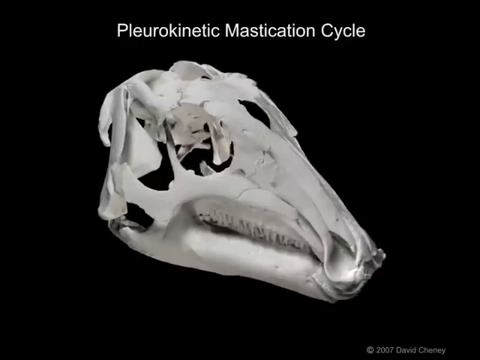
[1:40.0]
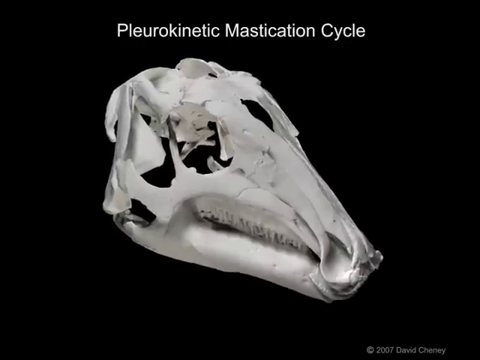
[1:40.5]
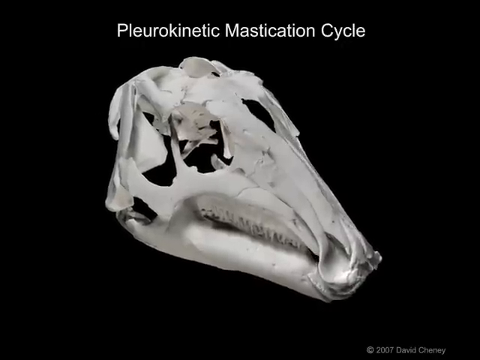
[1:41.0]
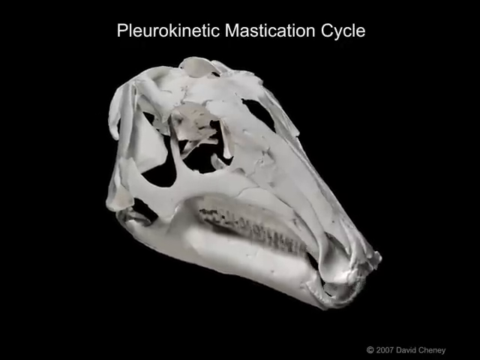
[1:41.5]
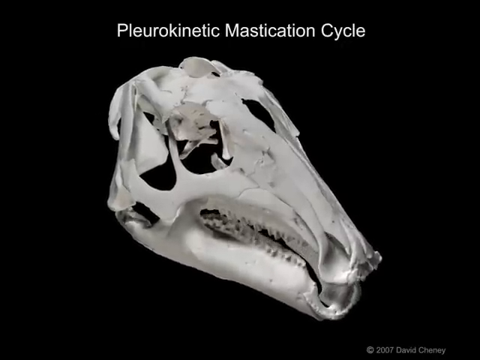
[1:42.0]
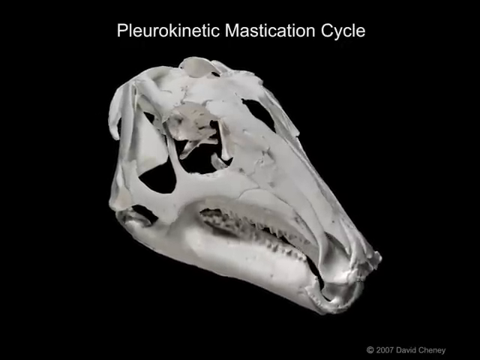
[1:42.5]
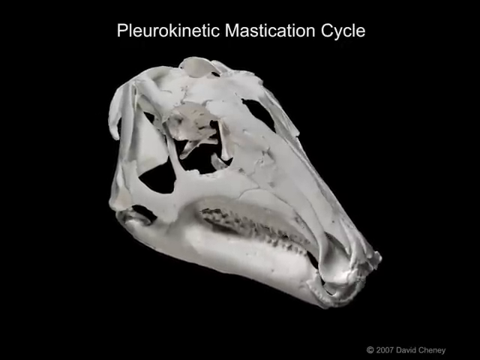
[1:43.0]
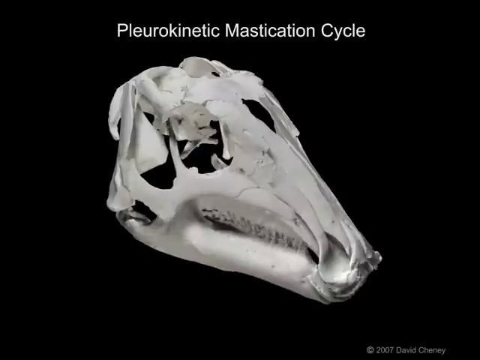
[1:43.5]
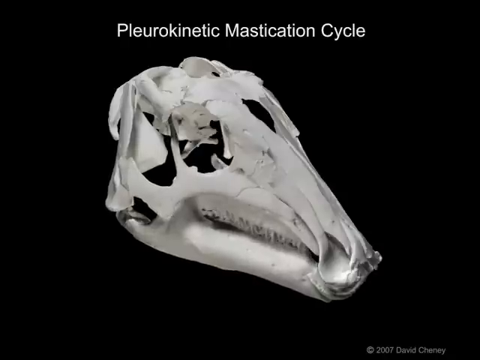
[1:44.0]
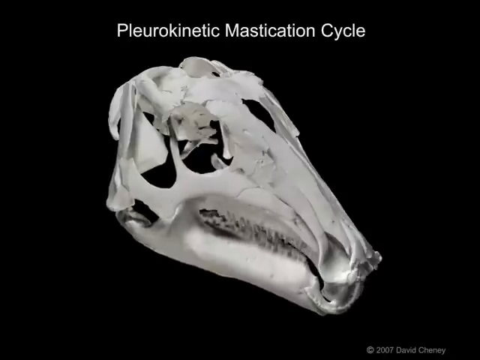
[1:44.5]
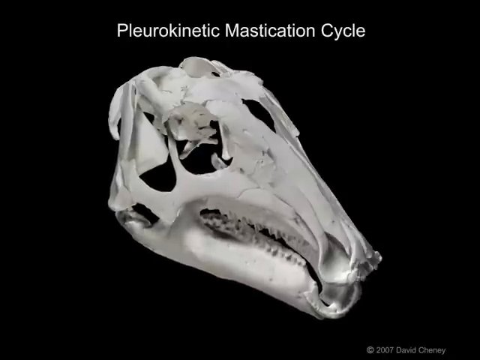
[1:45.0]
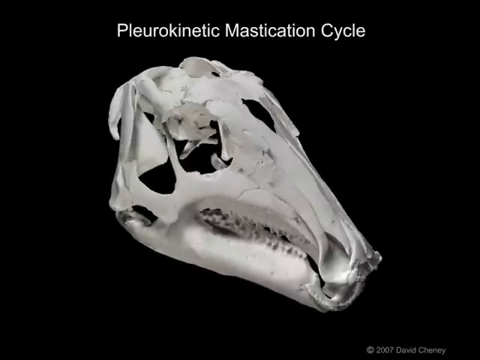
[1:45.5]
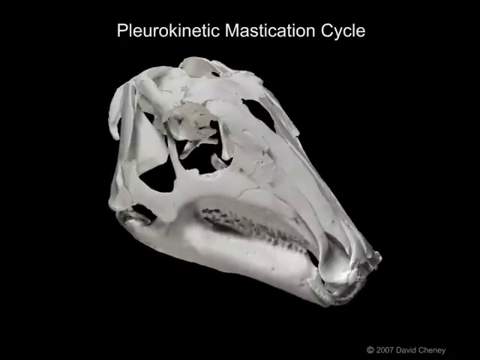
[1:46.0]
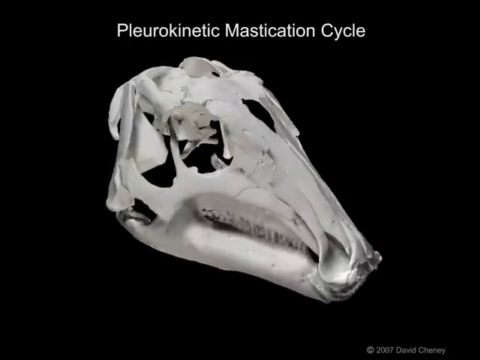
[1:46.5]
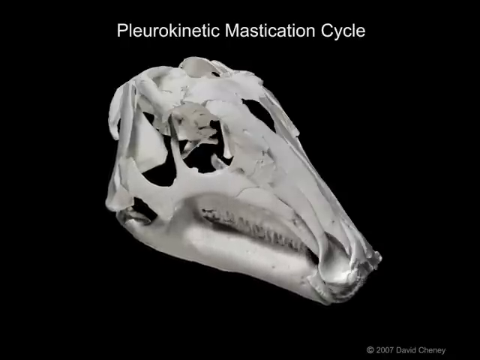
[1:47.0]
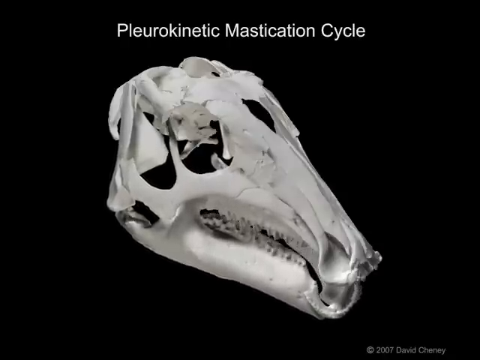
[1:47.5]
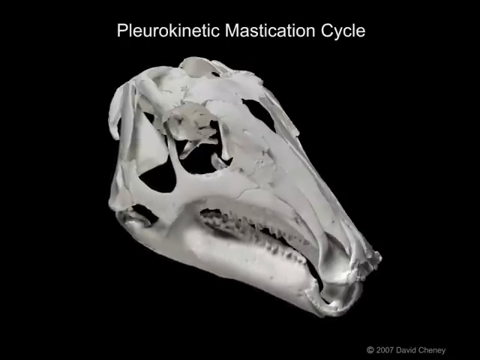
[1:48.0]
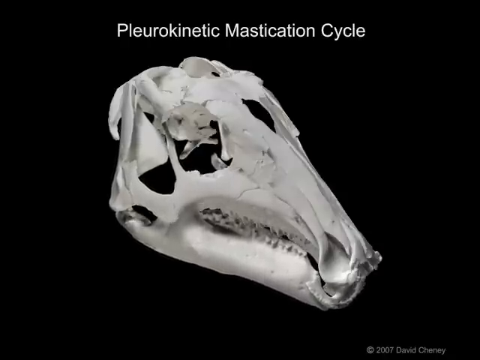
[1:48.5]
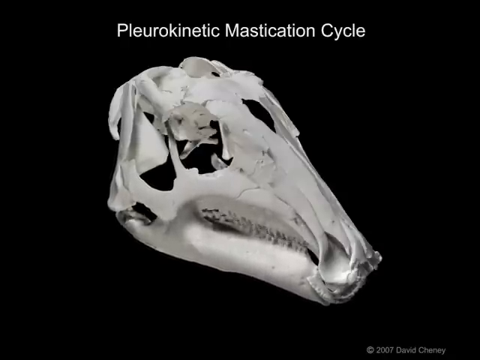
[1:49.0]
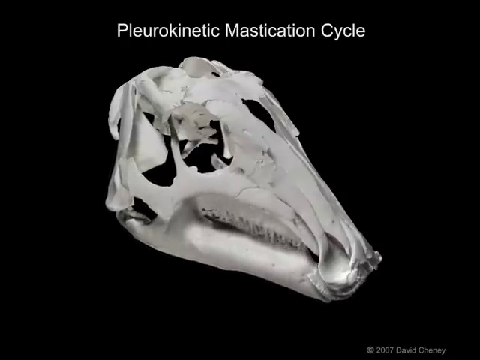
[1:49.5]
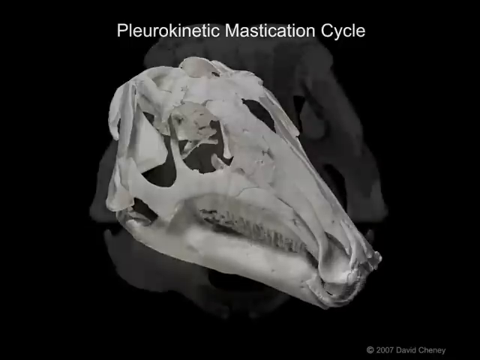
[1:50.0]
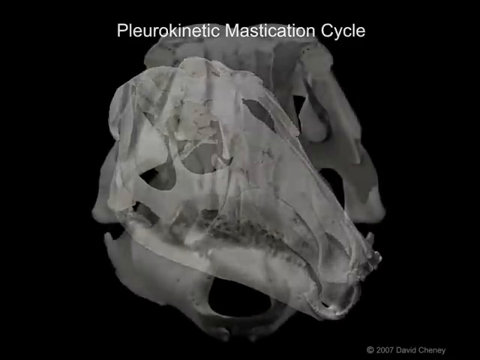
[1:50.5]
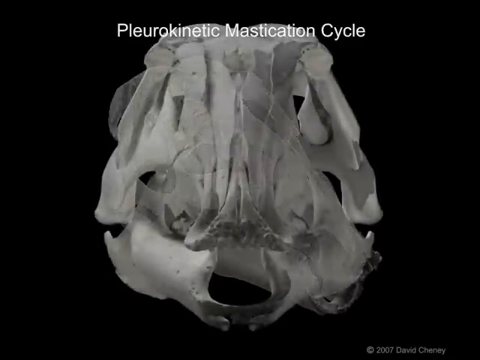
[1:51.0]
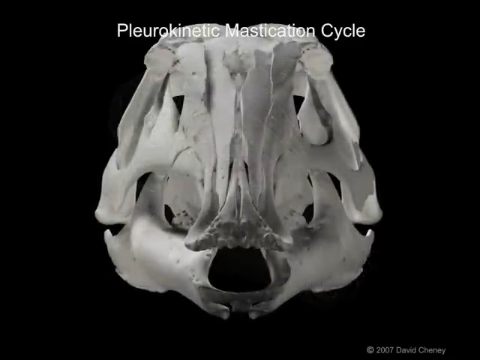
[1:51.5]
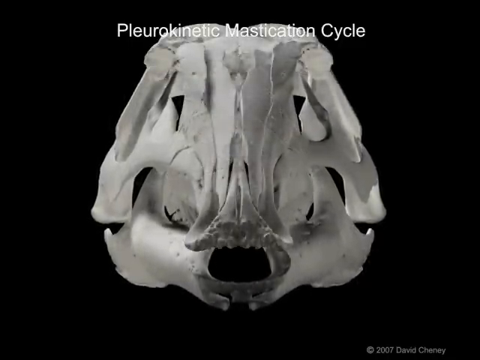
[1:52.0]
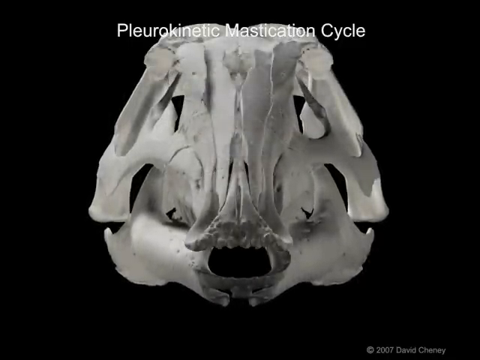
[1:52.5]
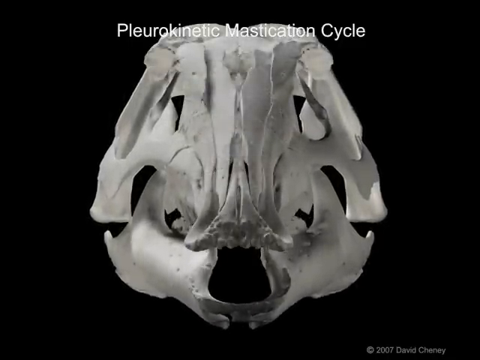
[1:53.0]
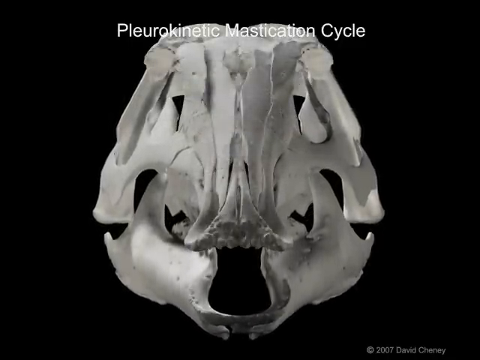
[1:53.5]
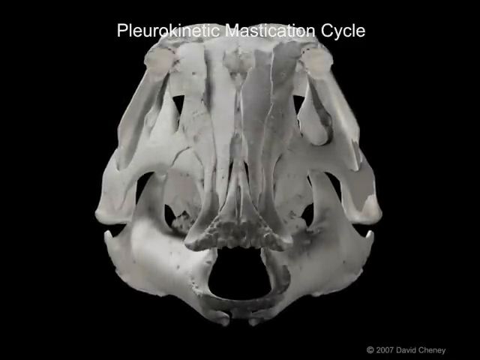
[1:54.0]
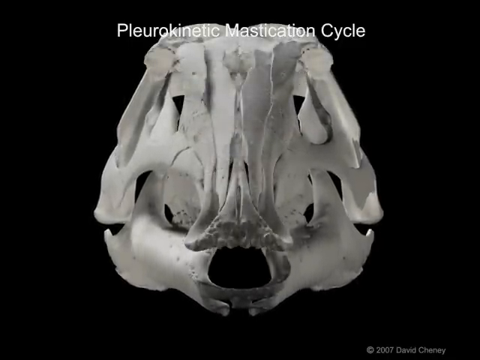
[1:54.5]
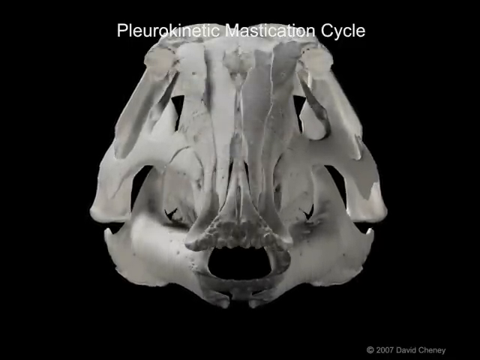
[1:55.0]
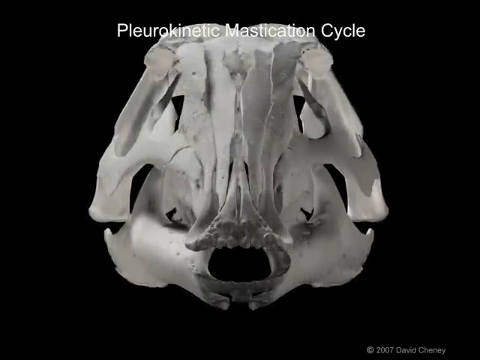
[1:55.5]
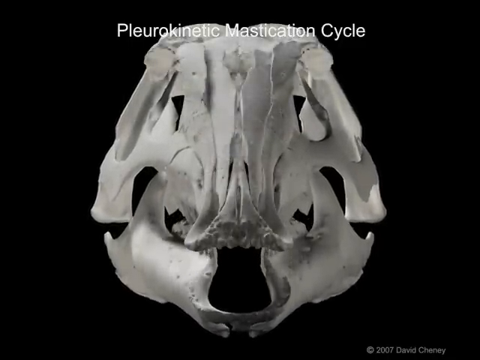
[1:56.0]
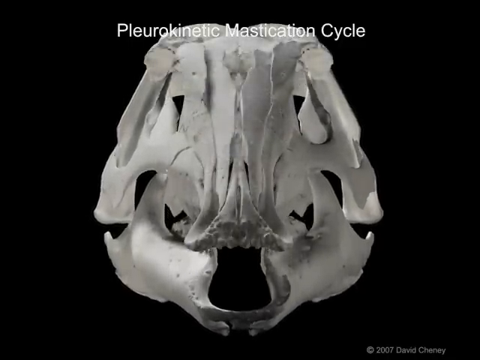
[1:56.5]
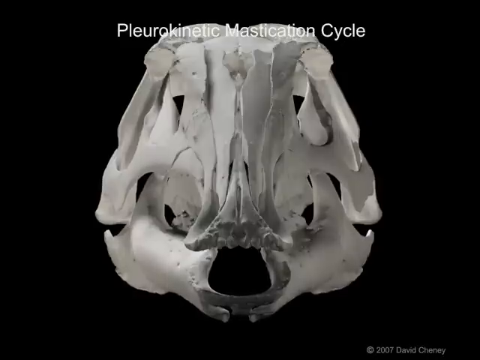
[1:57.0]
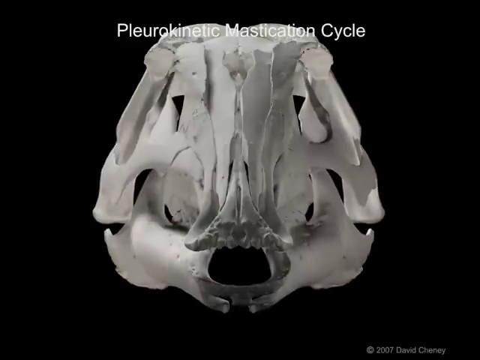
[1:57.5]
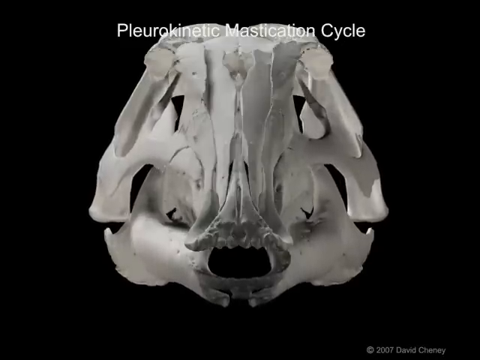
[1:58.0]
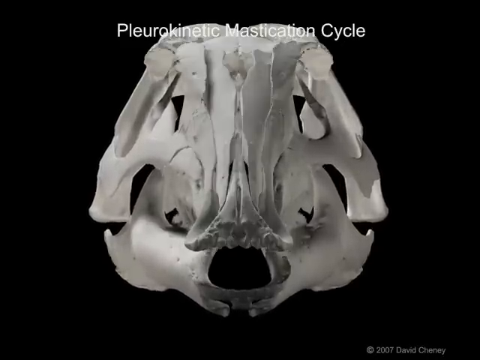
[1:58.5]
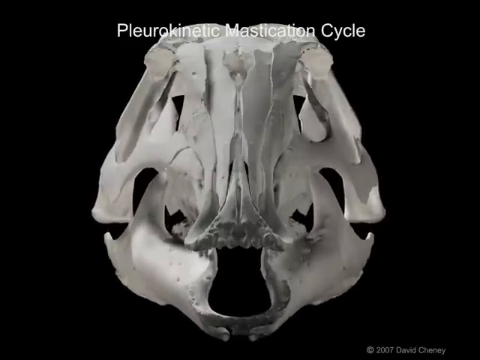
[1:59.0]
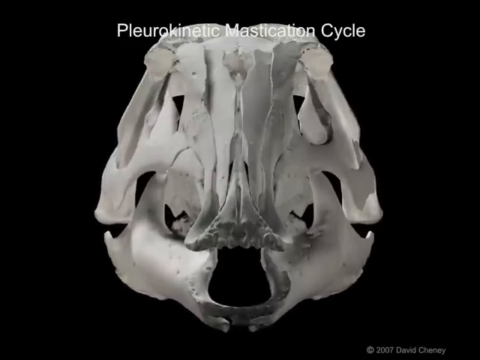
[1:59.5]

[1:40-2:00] Against the black background, the white dinosaur skull points toward the lower right corner in a right side profile view, under the title "pleurokinetic mastication cycle." The skull spins a little, and the jaw separates as the mouth opens and closes. The parts of the skull move in unison with one another: some move down, some move up, and some move slanted to the side. The skull then turns to the front so that it faces the viewer, with the parts moving. The view zooms in so the back of the skull can be seen working at the same time while the skull faces the viewer. There is nothing in the eye sockets.